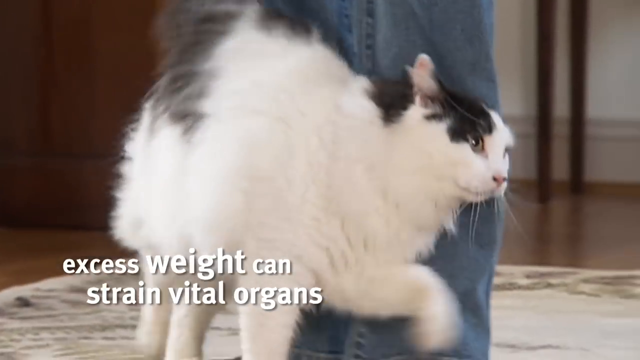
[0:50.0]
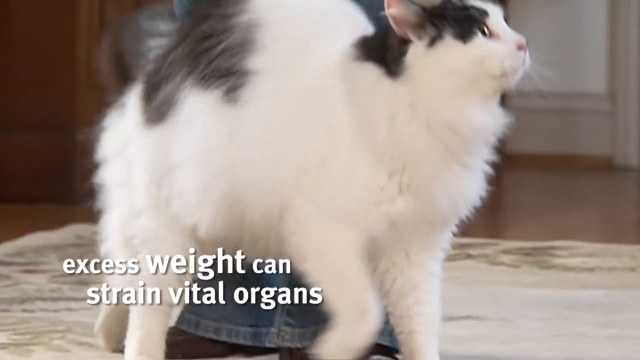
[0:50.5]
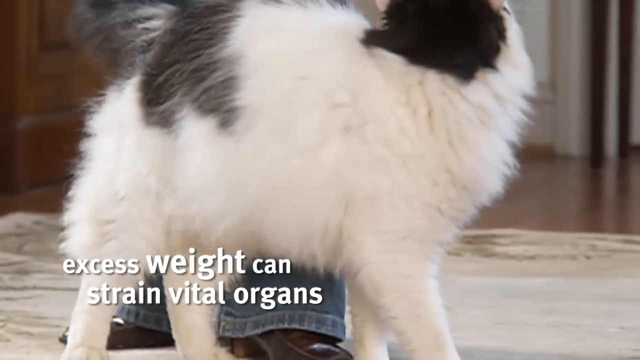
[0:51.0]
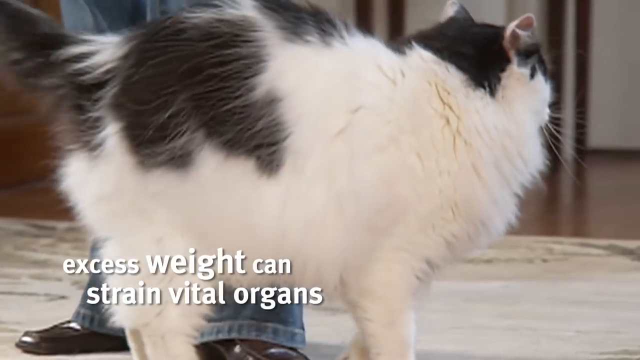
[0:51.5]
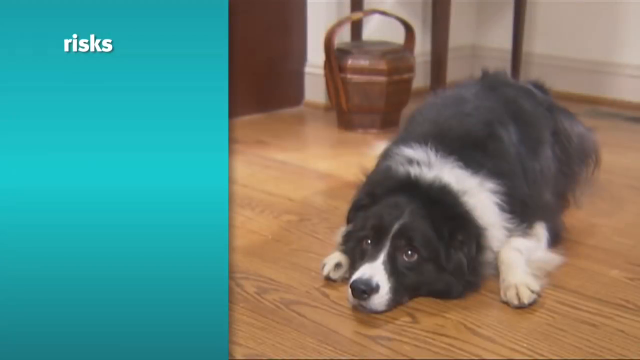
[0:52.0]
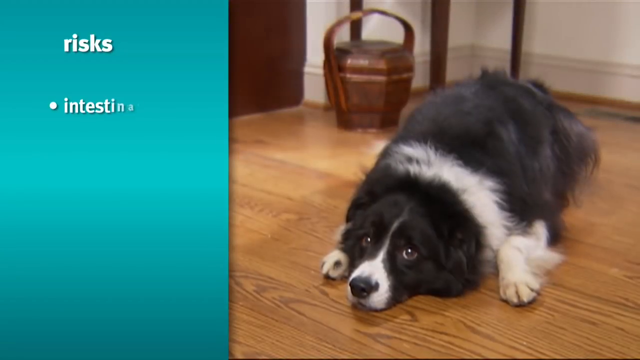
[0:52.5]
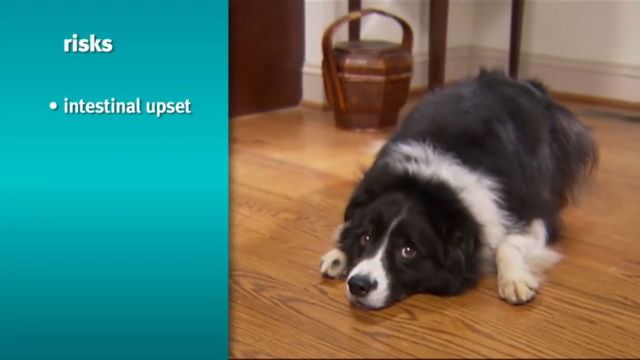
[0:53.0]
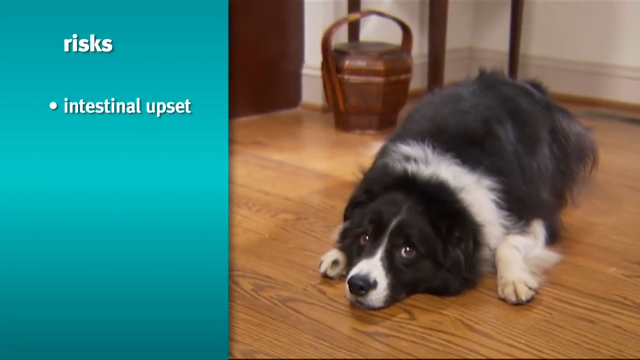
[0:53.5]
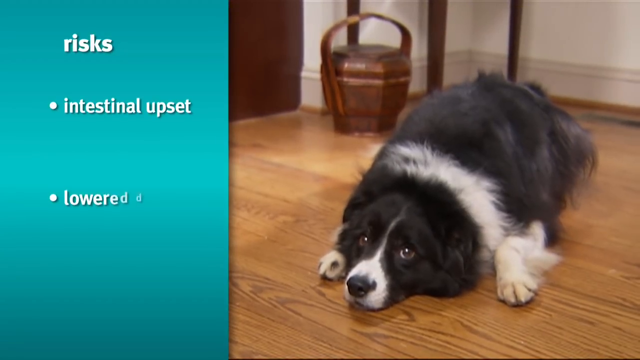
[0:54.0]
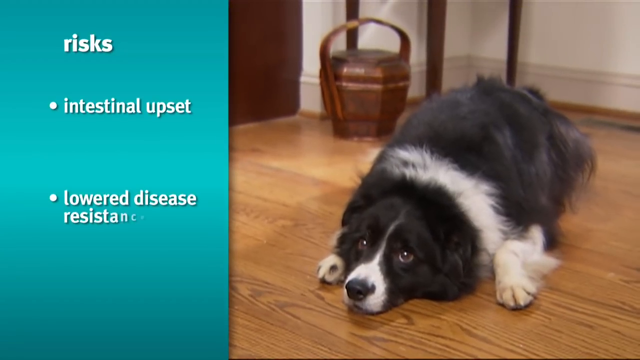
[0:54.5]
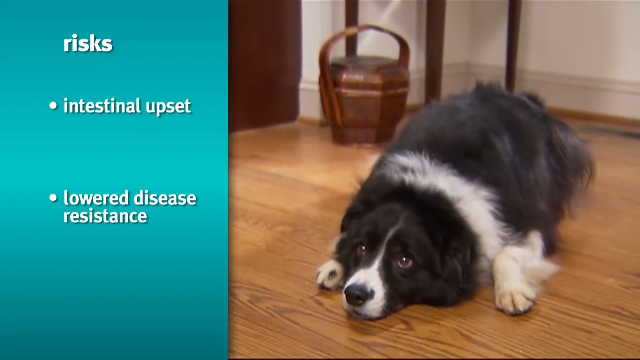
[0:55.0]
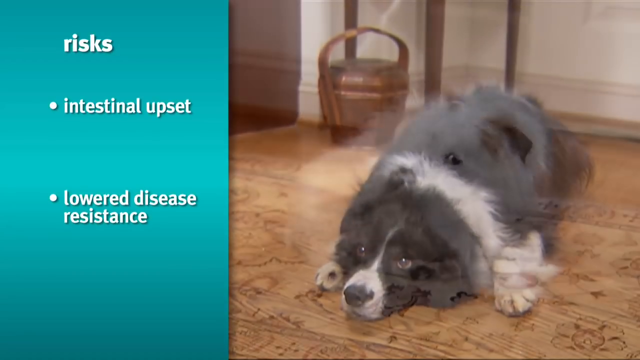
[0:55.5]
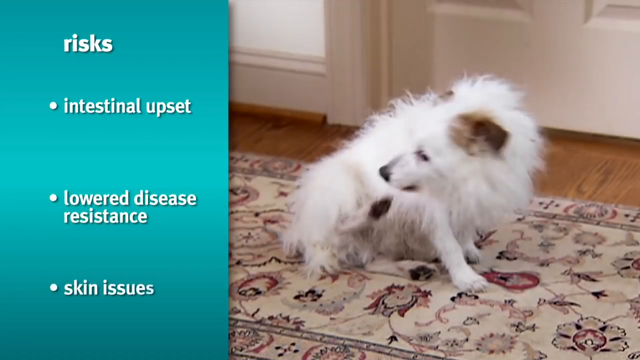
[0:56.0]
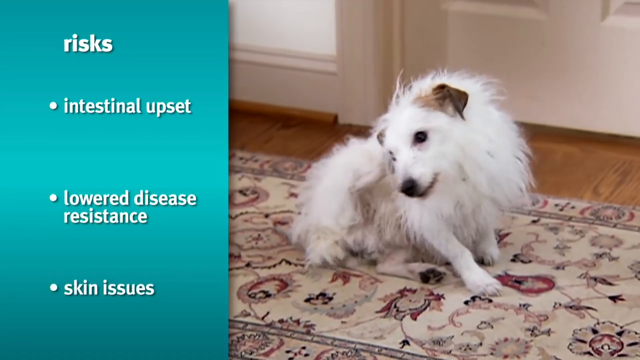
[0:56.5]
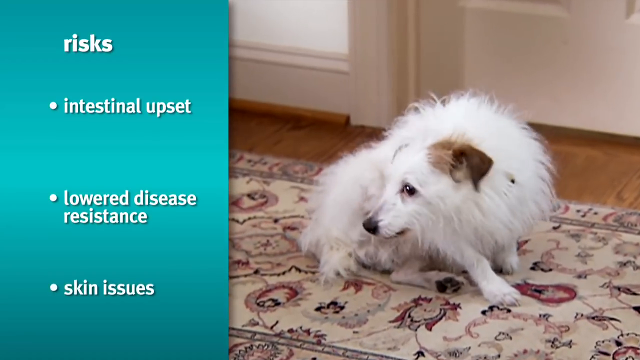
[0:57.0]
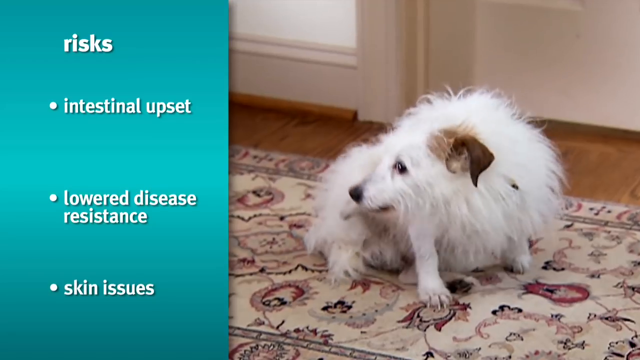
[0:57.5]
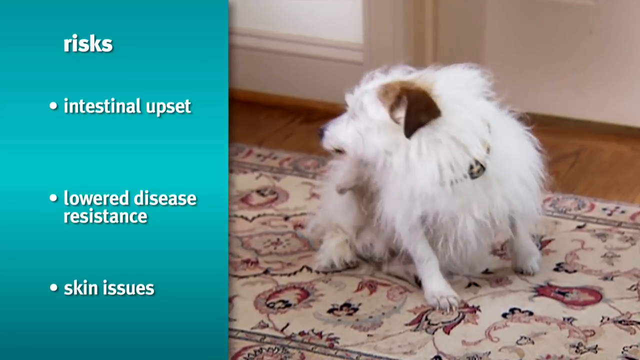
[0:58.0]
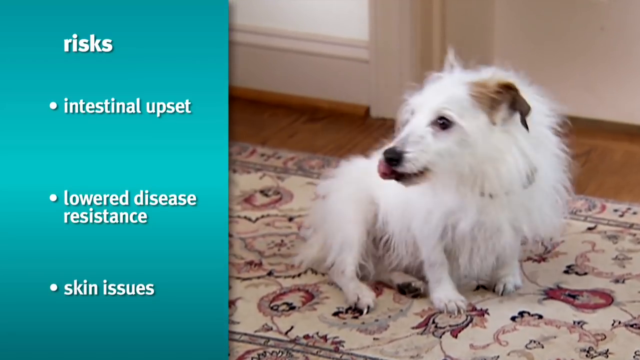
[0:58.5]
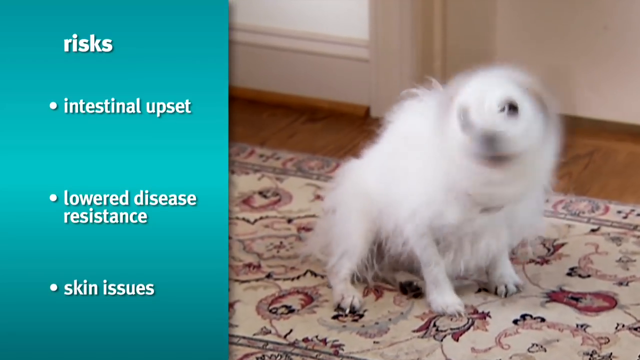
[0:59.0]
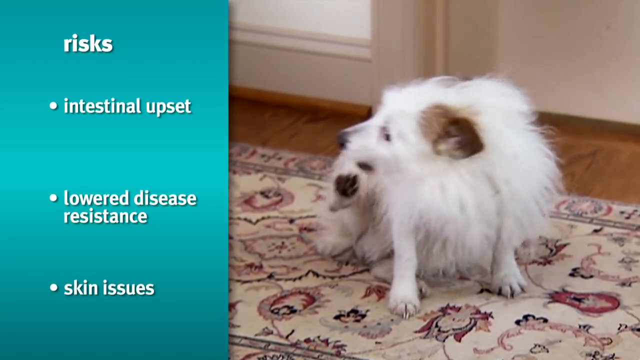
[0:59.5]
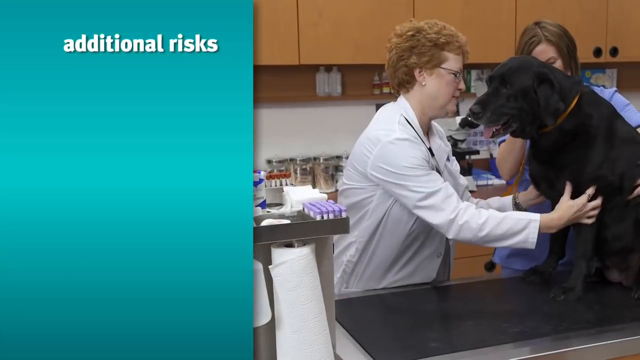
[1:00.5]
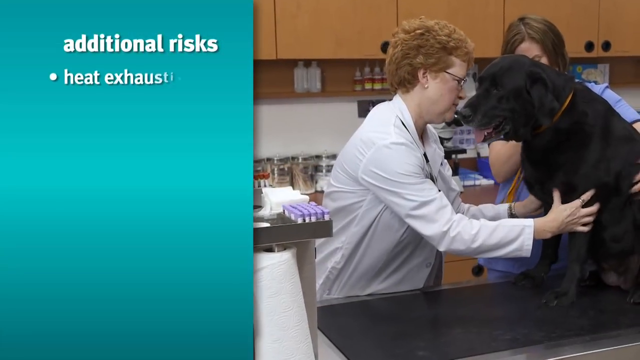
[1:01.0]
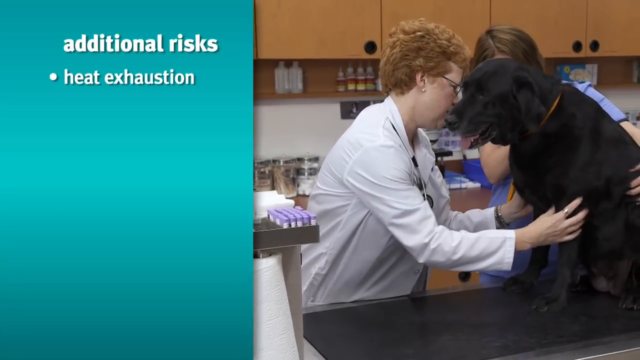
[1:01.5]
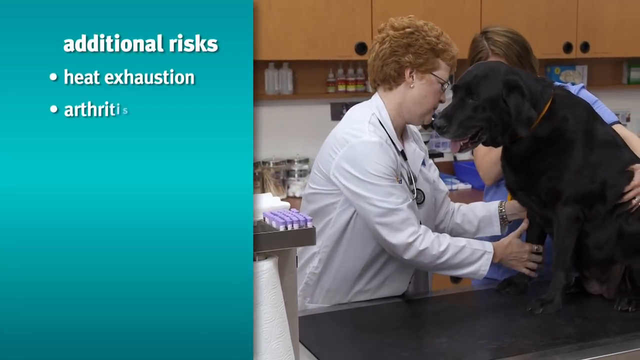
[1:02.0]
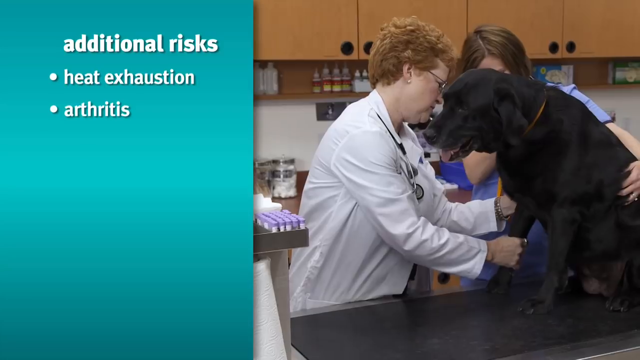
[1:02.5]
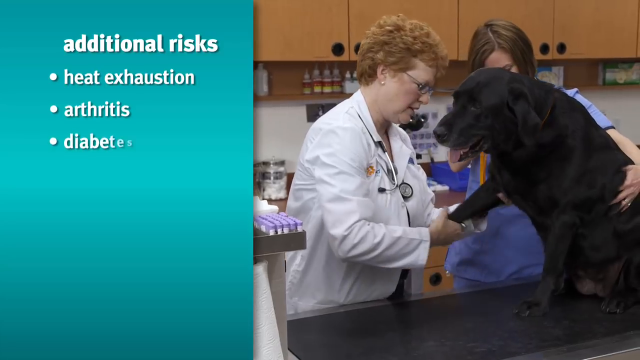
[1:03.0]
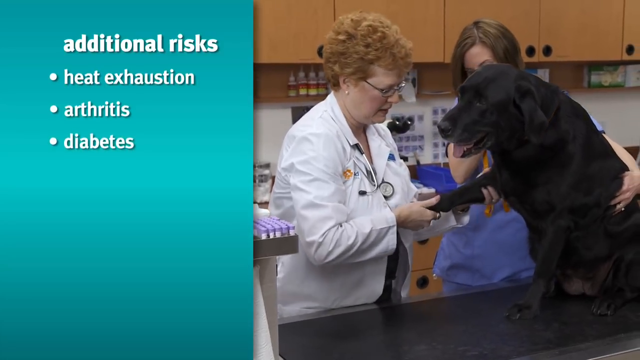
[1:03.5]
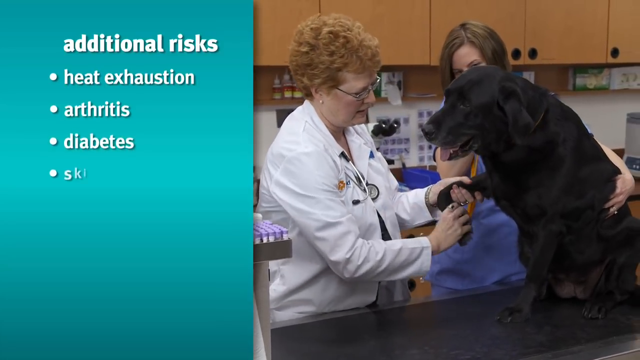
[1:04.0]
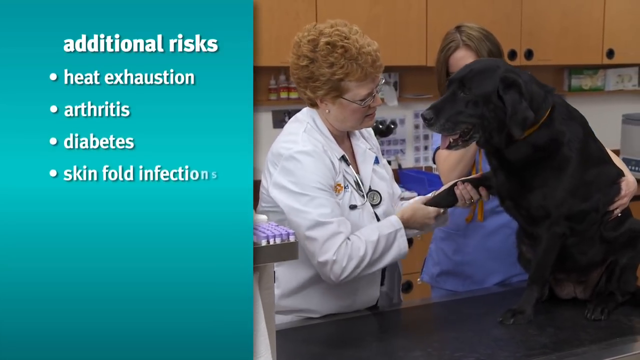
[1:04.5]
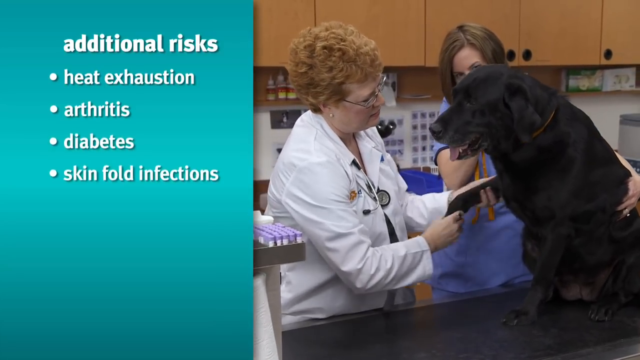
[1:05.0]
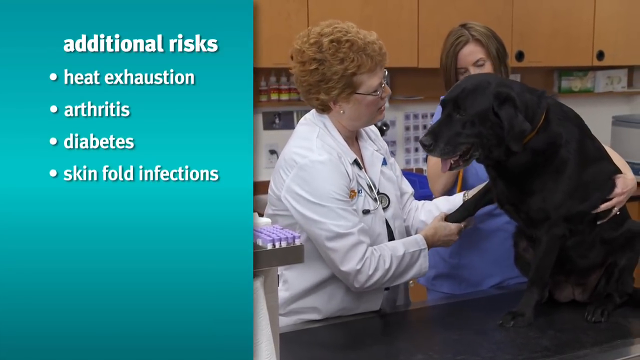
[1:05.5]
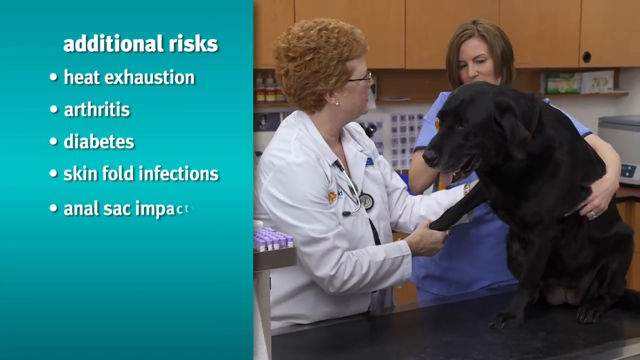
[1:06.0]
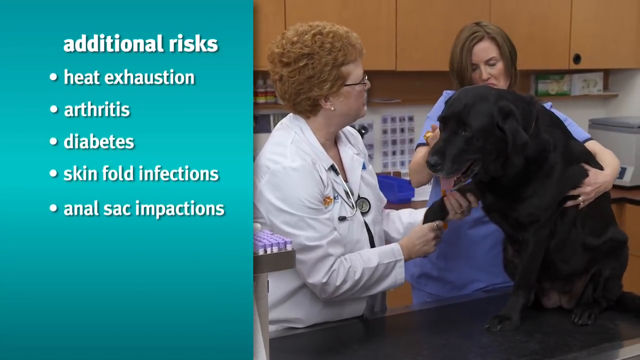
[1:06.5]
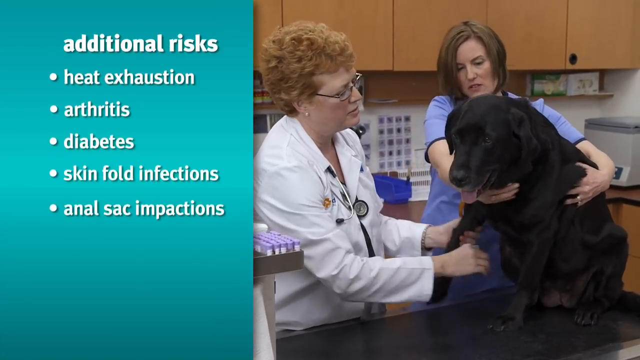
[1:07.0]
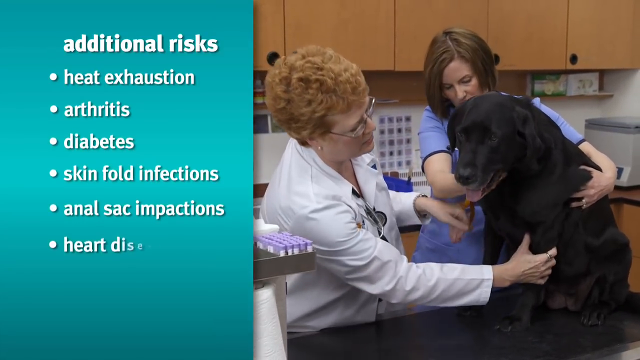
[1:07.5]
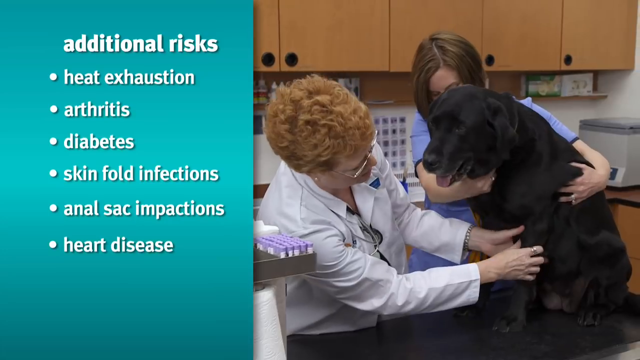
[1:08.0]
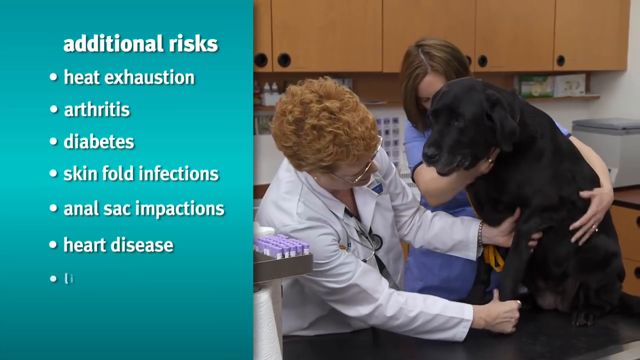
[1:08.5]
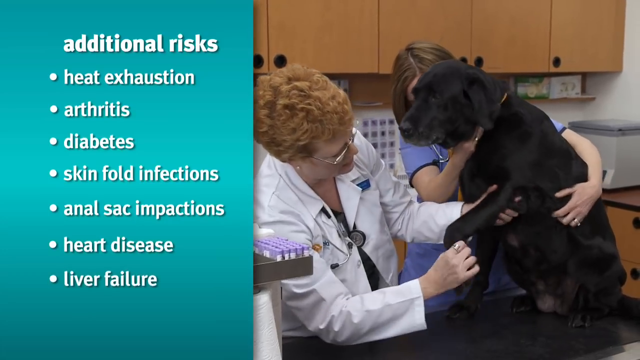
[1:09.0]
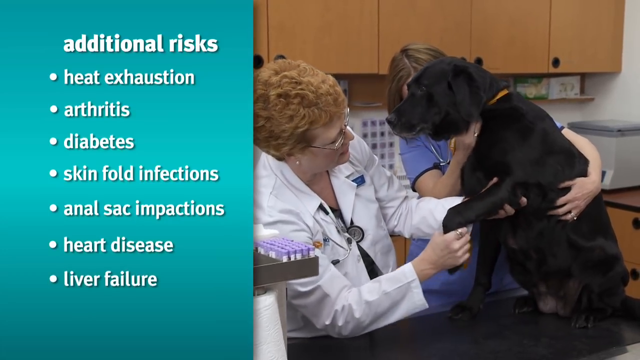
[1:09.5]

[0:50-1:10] A cat with black and white hair is shown, followed by a dog that is sitting. A list of additional risks follows, including arthritis, diabetes, infection, heart disease and liver failure.